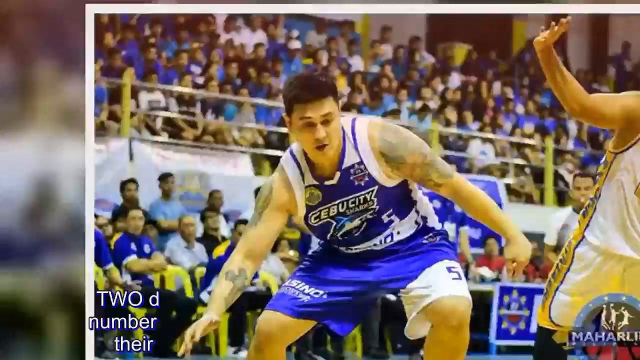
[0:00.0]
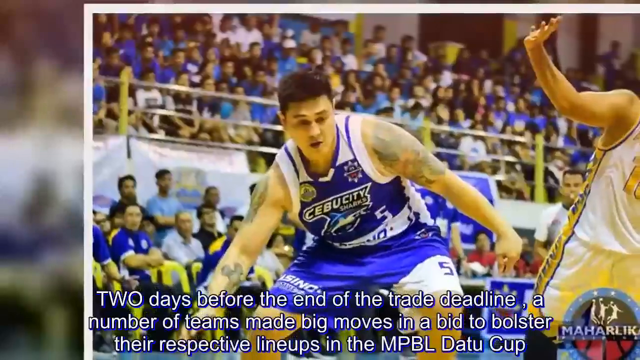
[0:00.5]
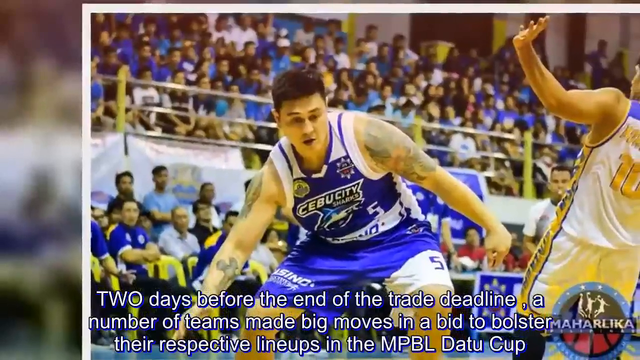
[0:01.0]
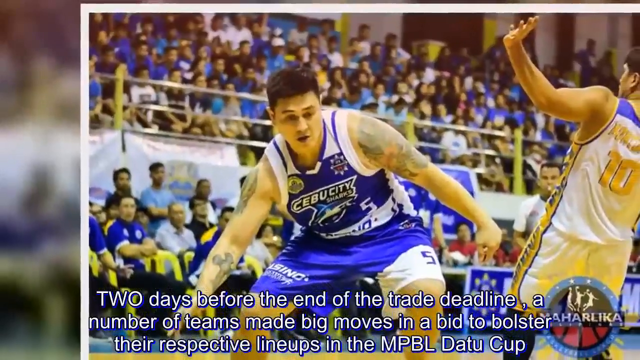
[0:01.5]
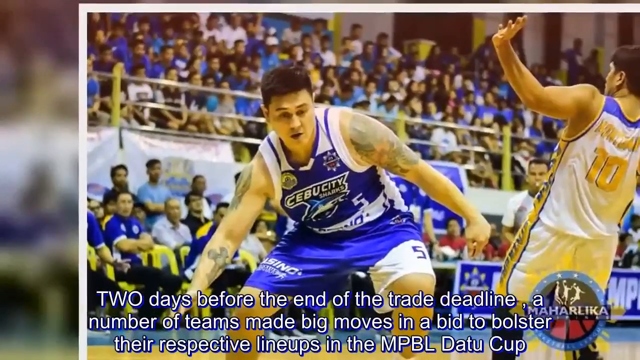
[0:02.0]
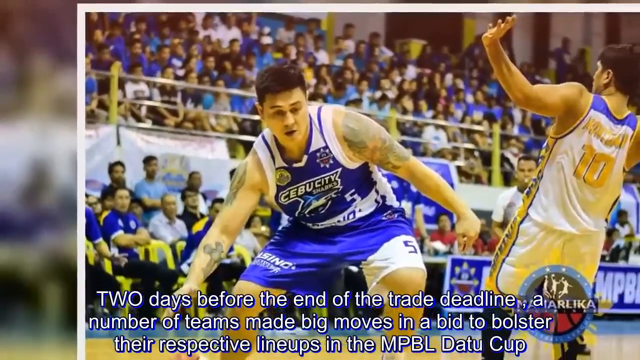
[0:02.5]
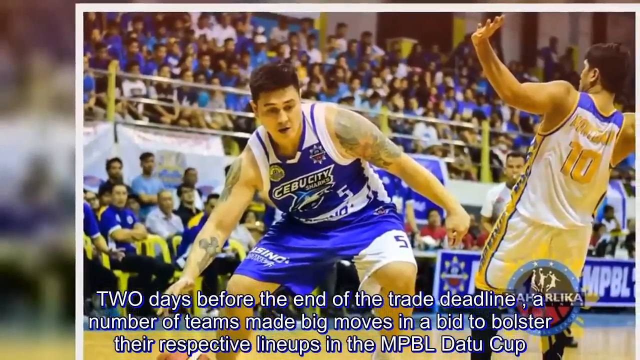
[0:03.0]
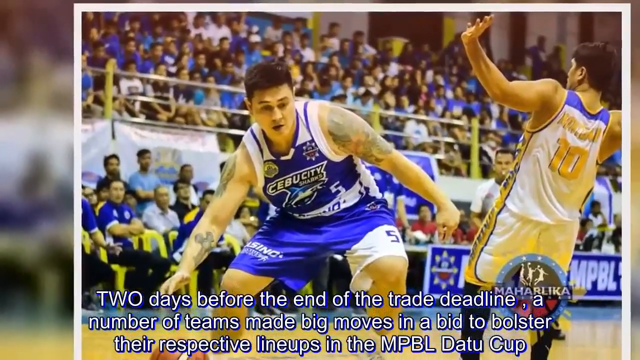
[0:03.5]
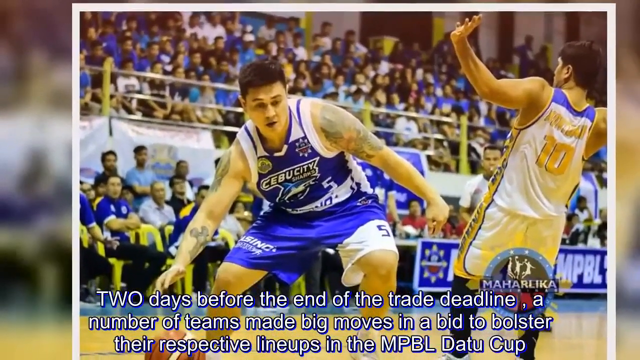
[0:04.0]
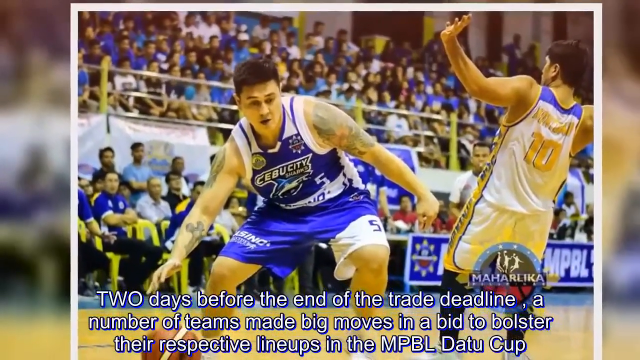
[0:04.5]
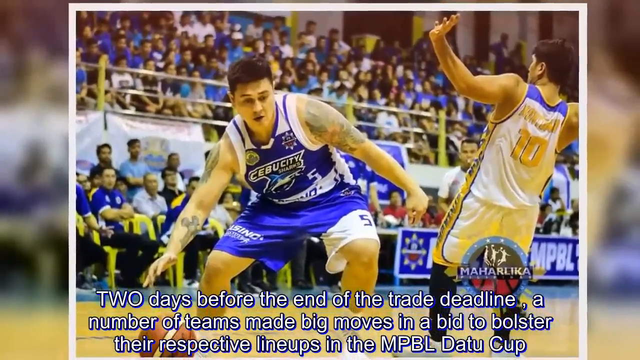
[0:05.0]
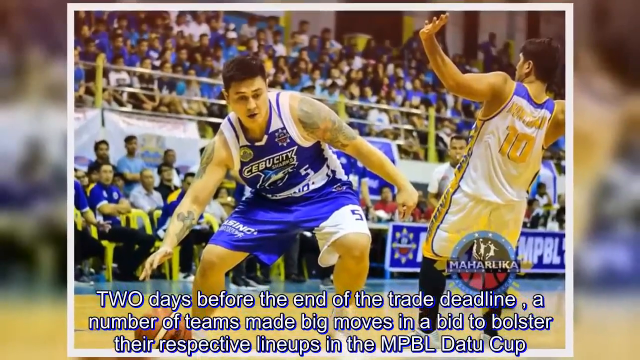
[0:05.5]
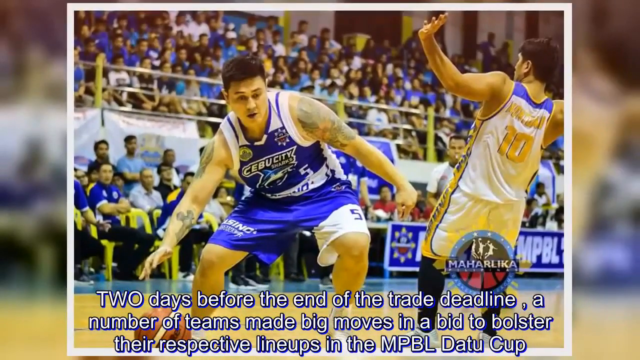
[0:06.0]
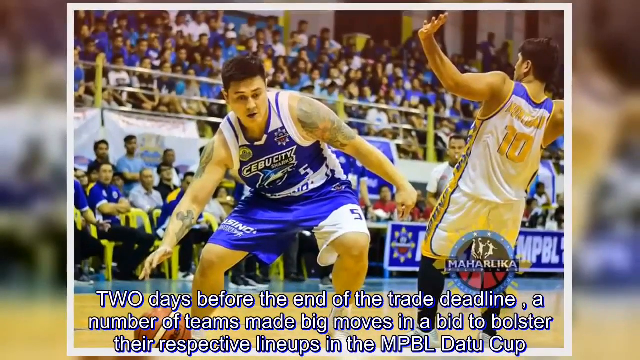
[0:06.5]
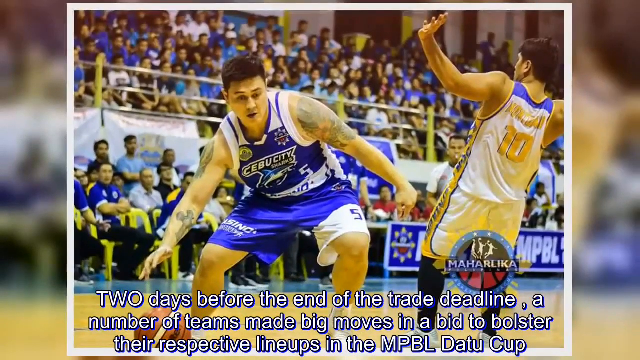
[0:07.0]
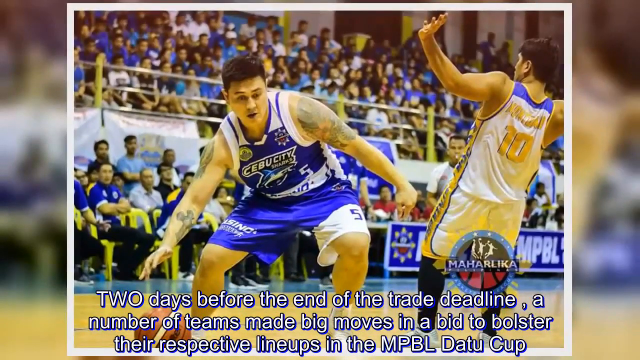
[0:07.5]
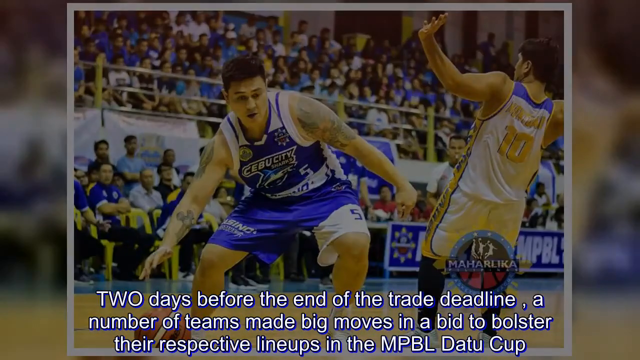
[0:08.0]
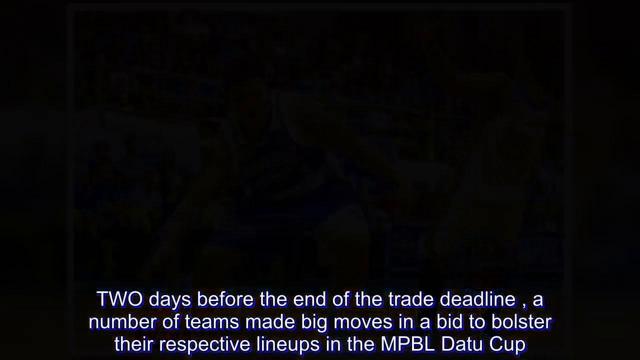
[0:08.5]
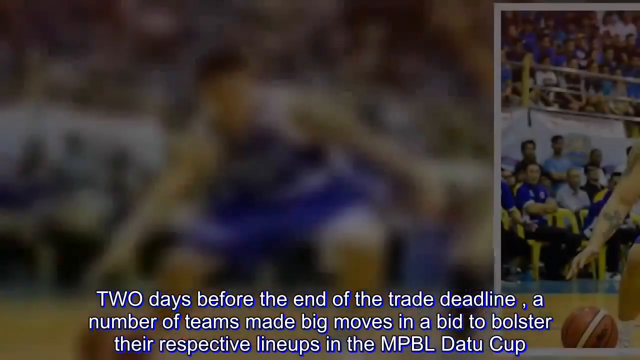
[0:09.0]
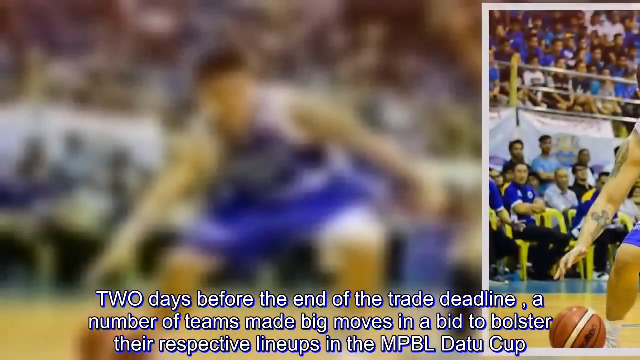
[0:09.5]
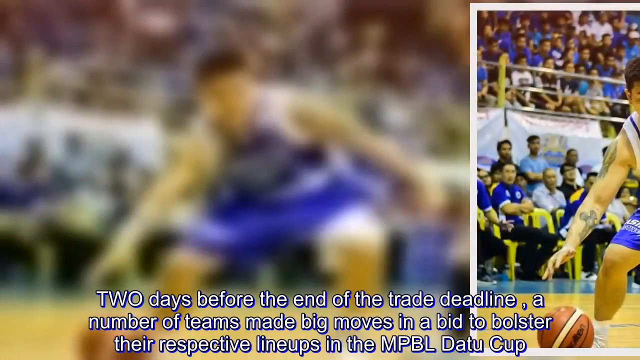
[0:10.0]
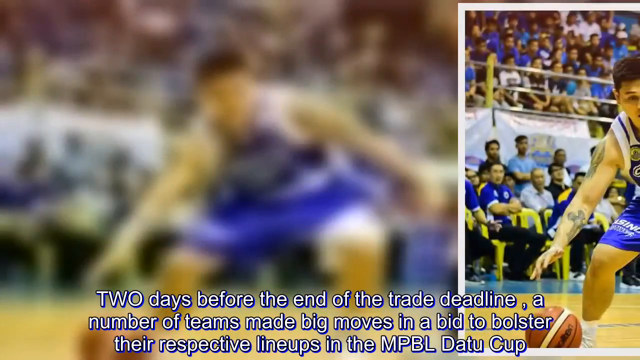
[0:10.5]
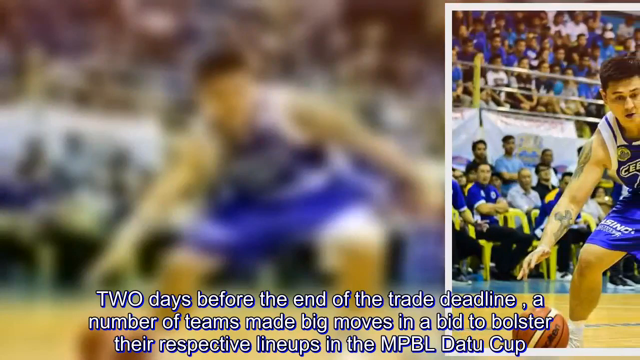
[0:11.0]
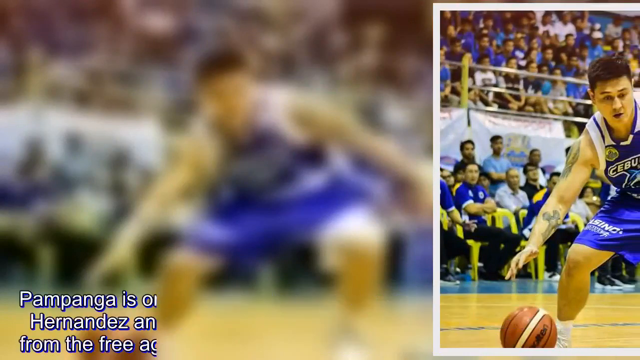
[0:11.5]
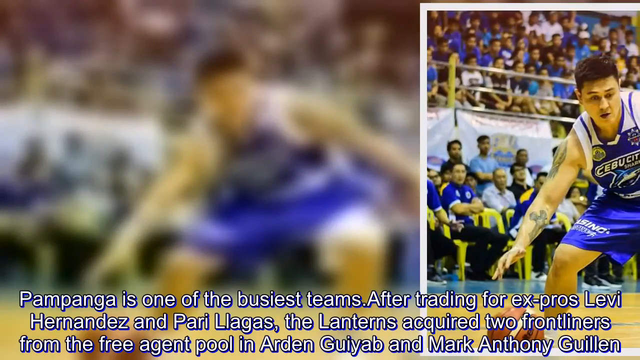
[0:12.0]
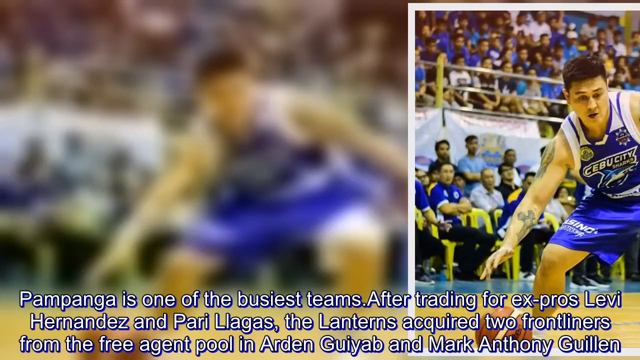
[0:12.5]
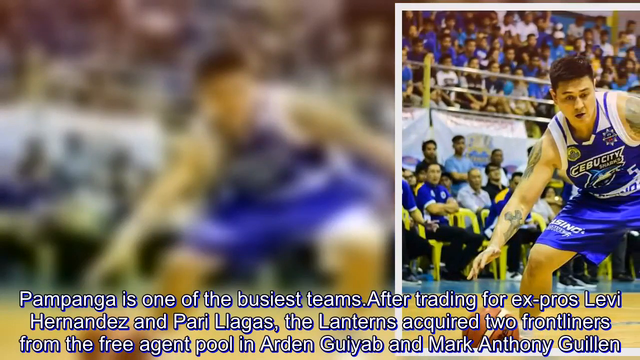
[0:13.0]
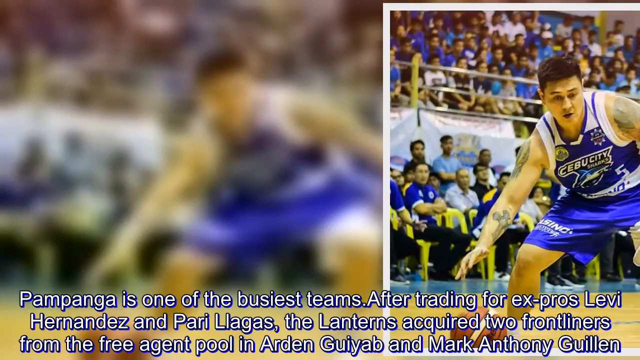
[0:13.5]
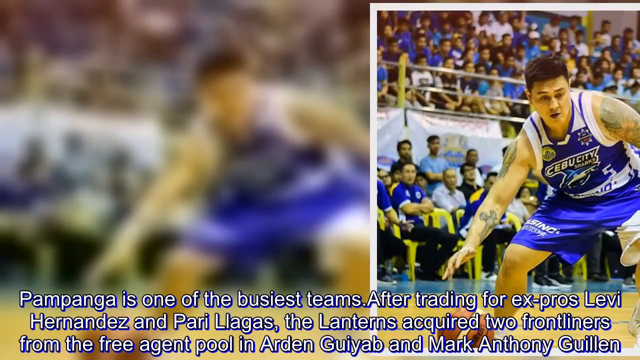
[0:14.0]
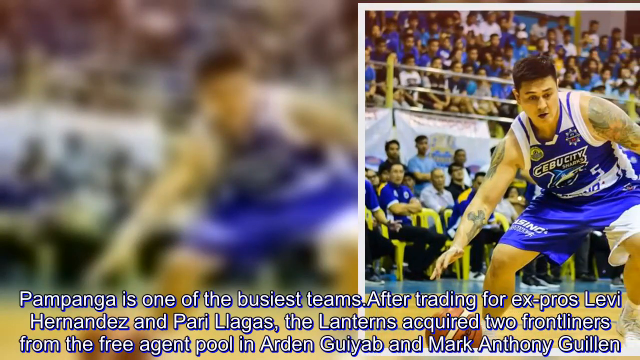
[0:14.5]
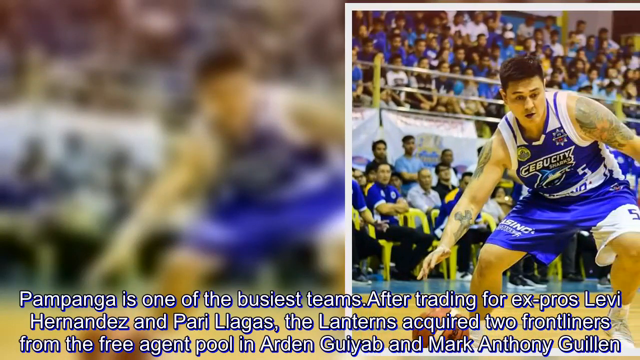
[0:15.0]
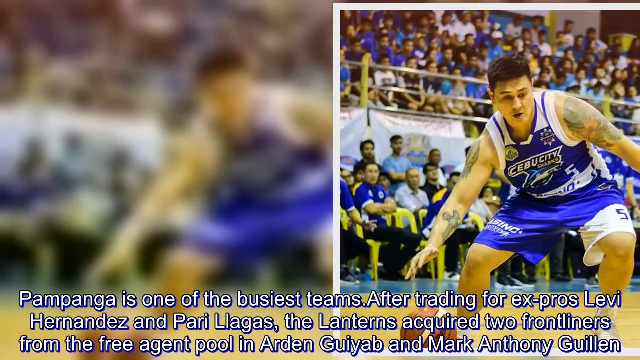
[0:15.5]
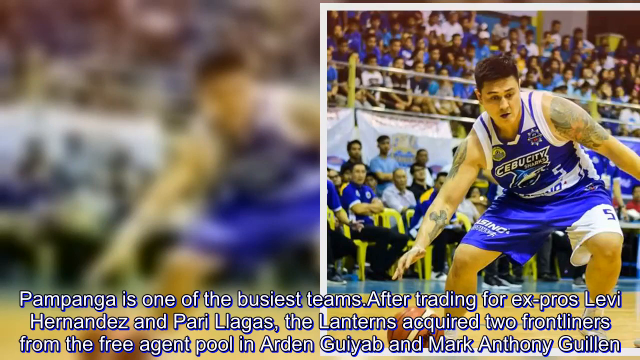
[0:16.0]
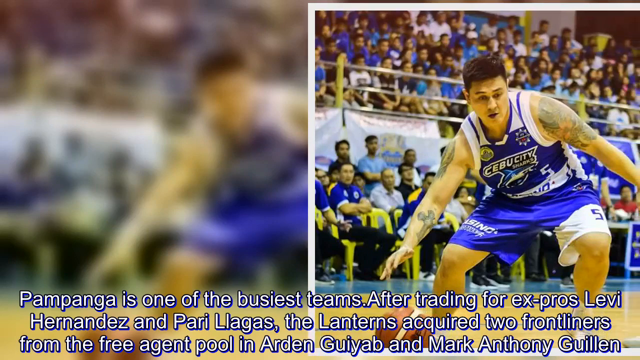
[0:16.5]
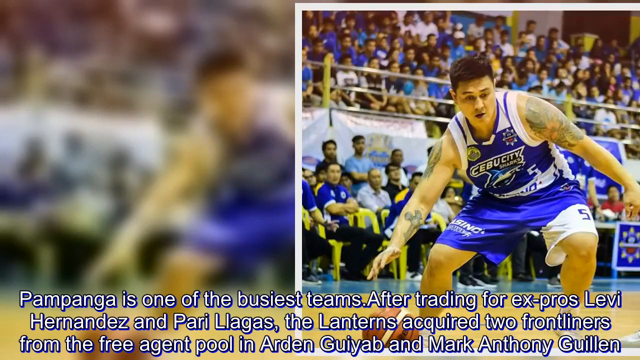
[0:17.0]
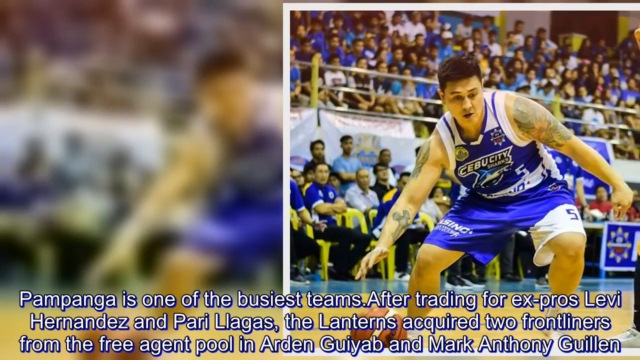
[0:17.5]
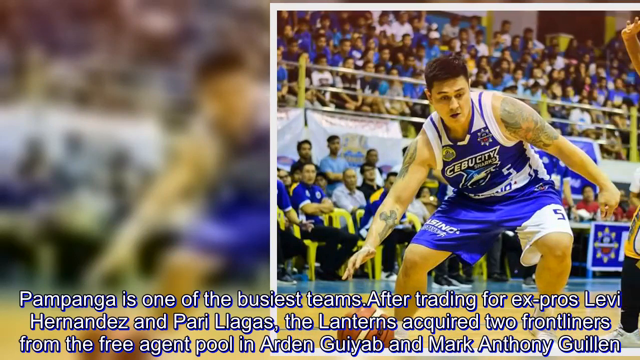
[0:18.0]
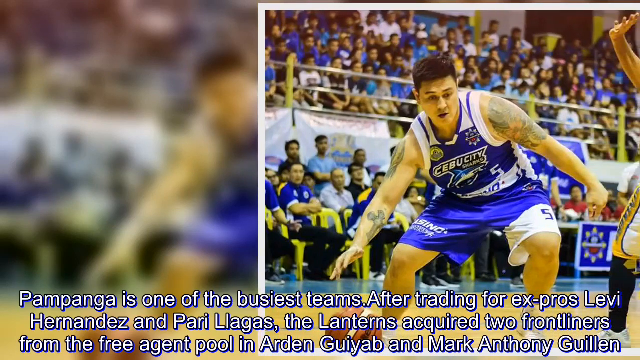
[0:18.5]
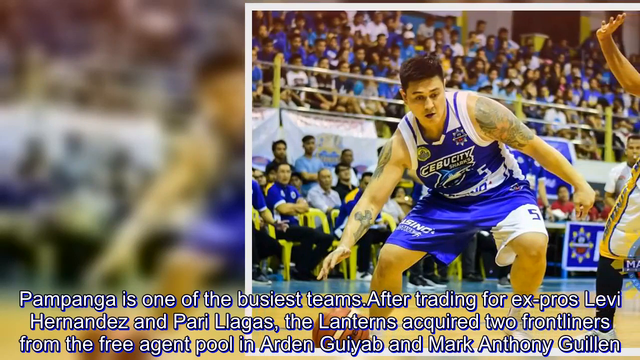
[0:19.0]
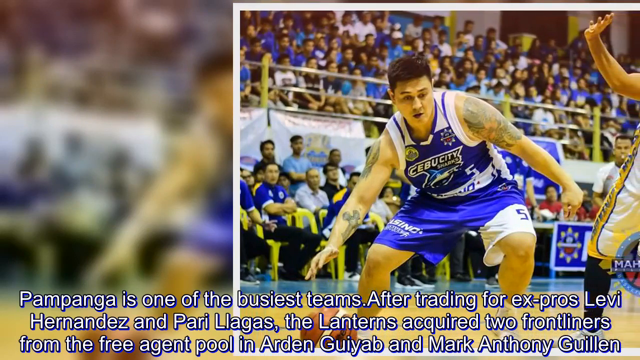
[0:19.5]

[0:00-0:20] On-screen text begins "two days before the end of the trade deadline a number of teams made big moves" and describes teams trading for several players. A picture shows many players in a game, one in a blue t-shirt and others in white and yellow jerseys, with many people in the gallery supporting the team.